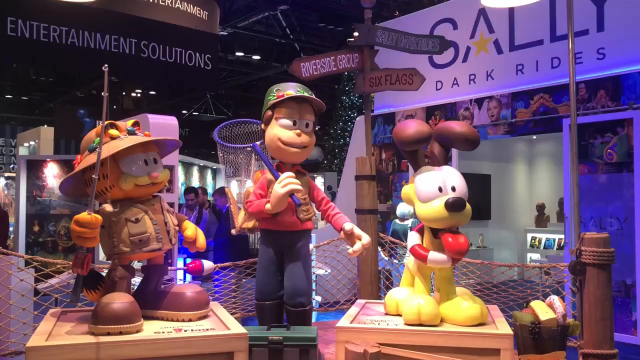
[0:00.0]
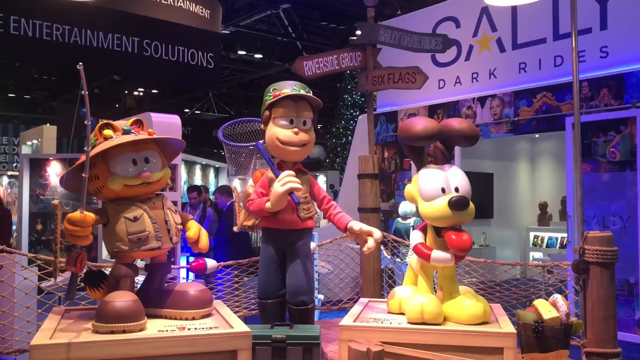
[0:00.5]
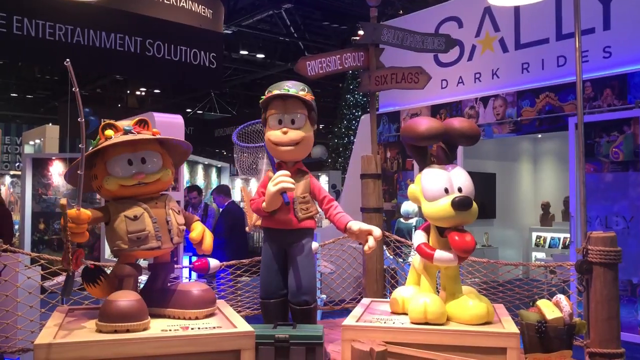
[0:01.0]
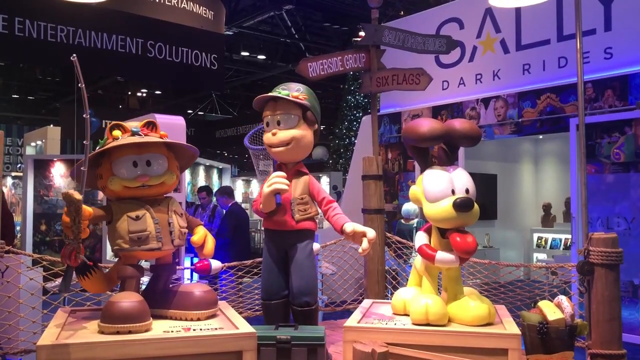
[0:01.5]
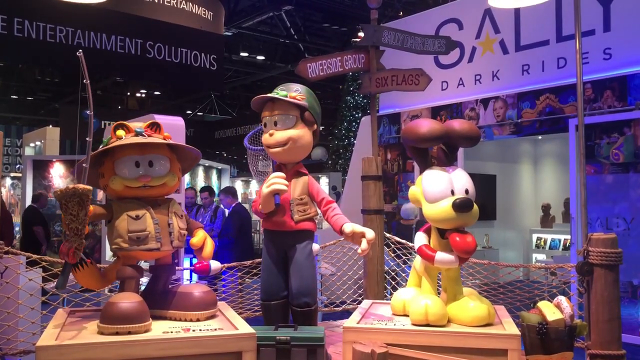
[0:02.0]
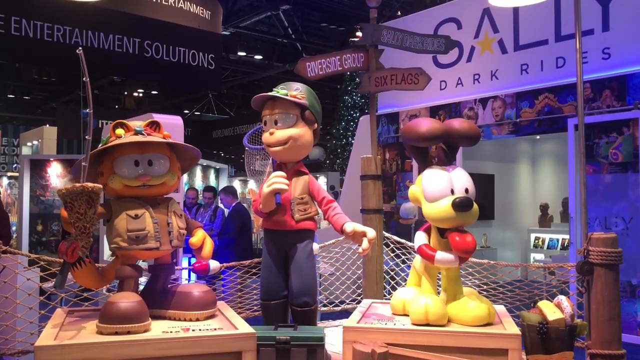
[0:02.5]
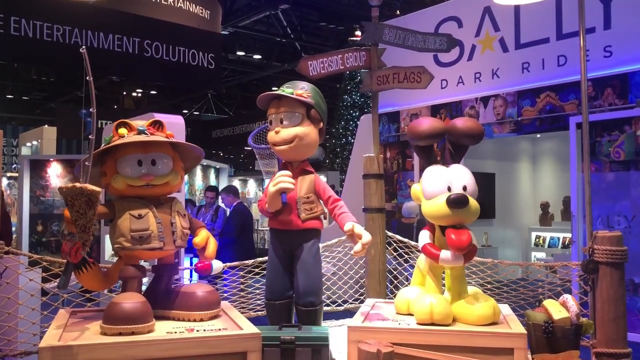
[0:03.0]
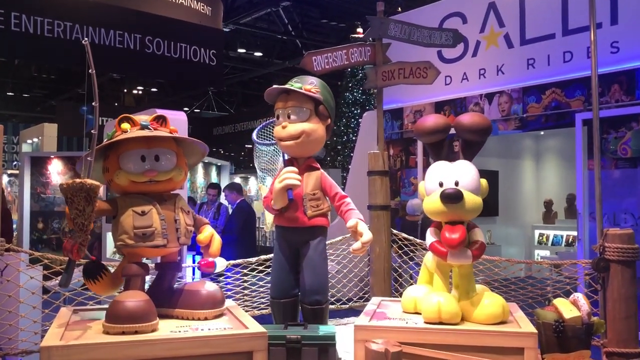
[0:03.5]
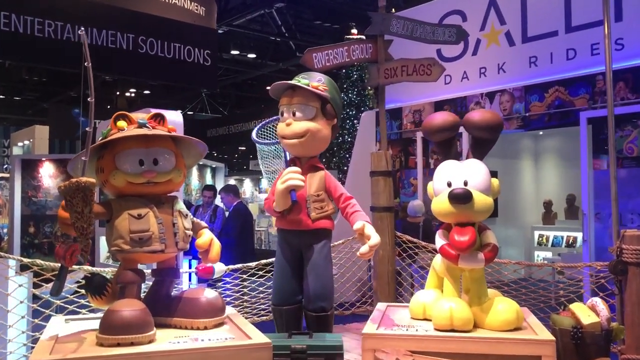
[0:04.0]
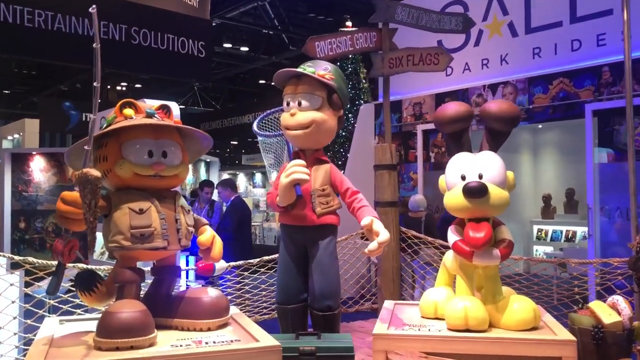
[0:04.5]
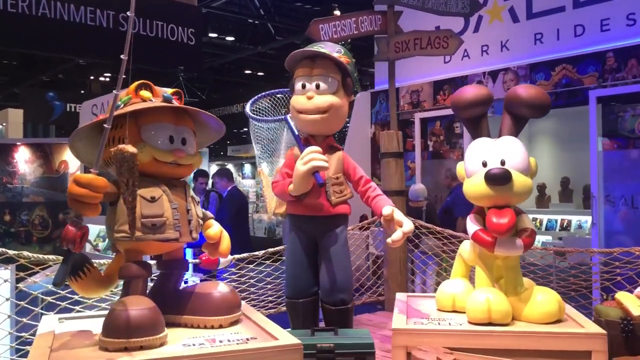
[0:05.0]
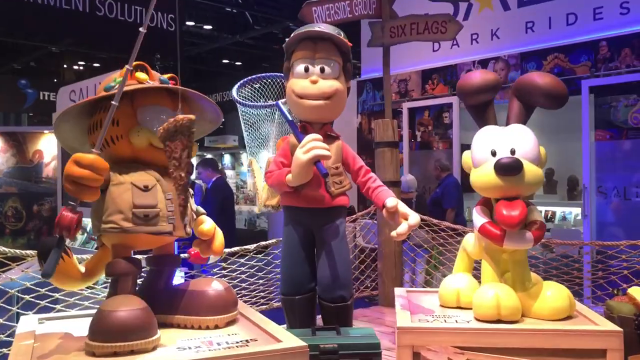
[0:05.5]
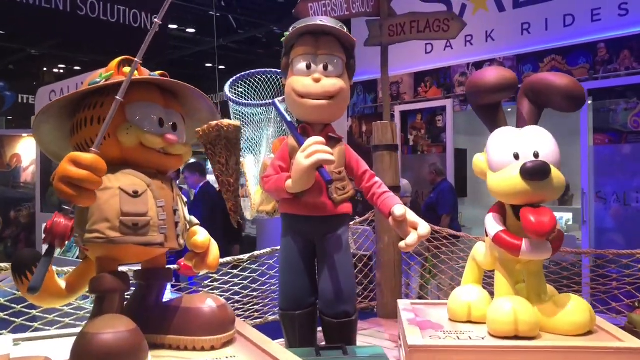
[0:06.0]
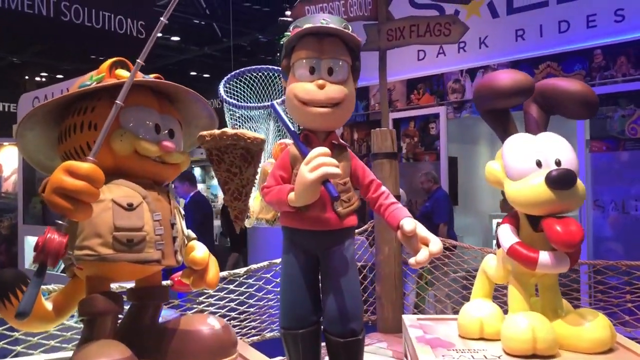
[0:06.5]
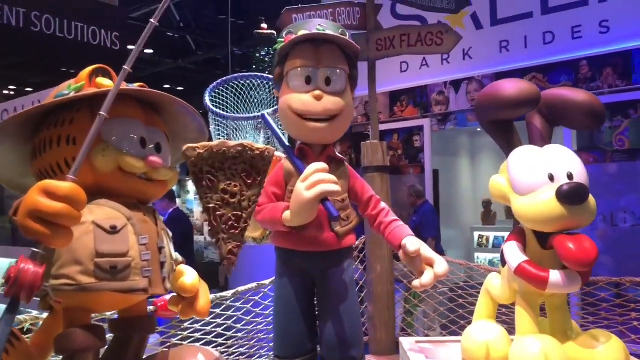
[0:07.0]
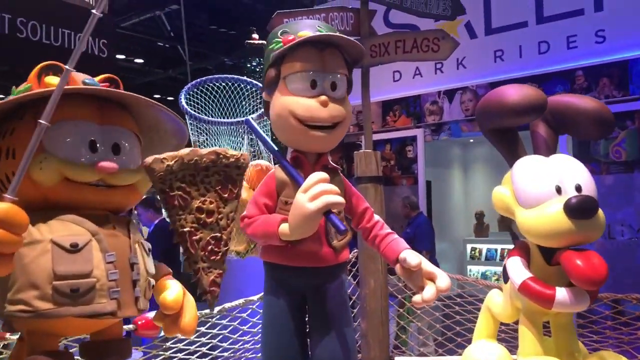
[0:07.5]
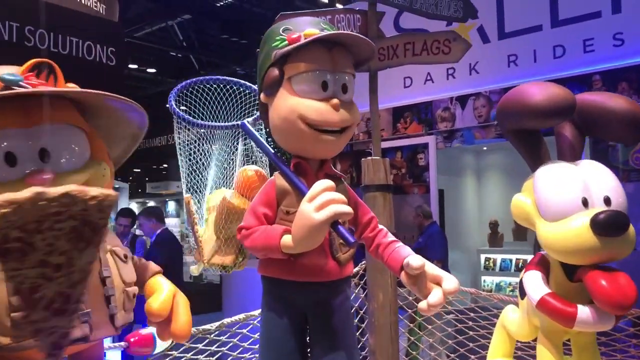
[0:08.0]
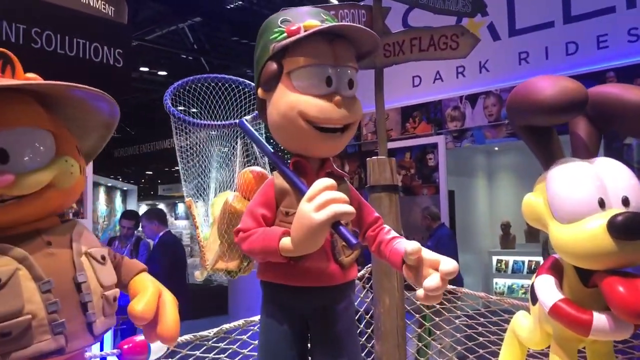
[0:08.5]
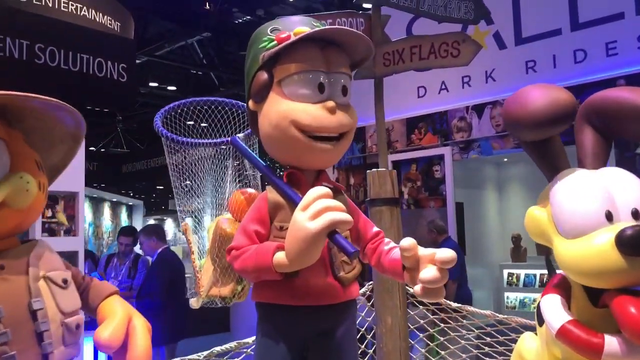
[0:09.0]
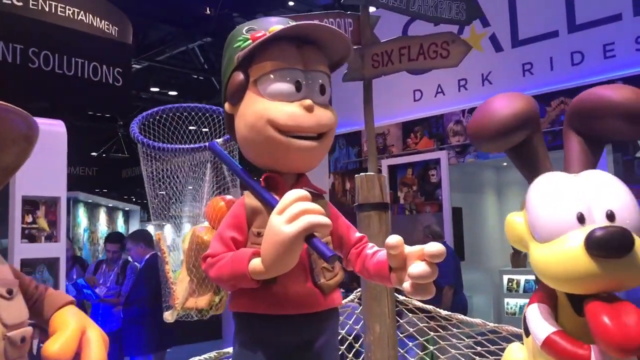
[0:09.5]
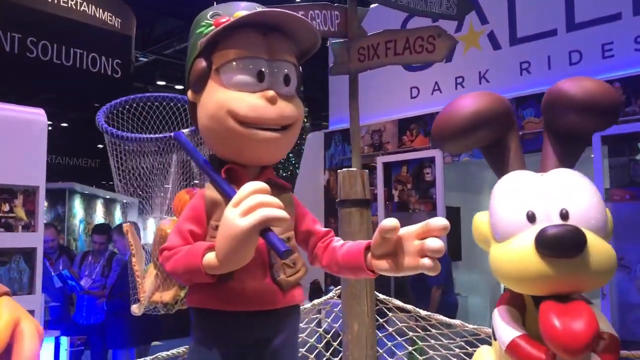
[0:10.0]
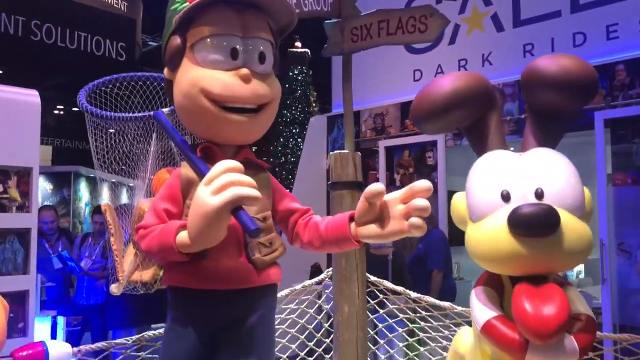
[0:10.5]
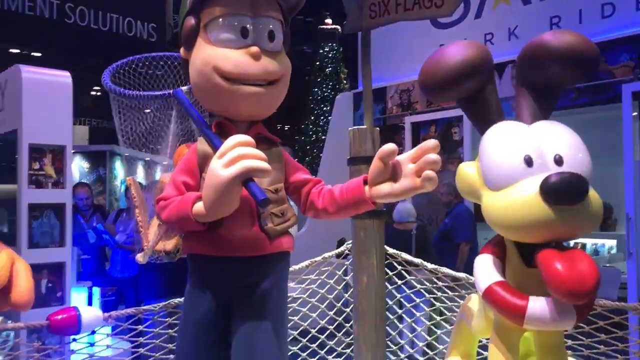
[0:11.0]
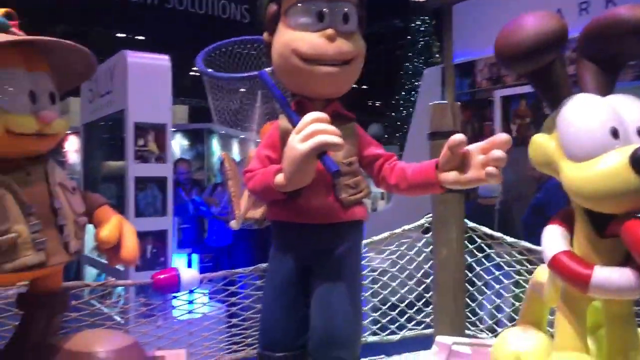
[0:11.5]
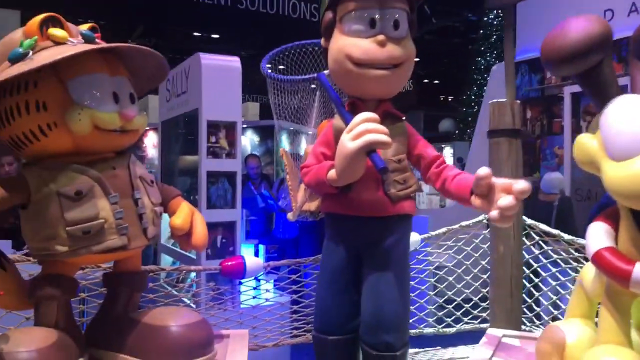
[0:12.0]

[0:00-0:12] Three animated characters appear to be on display in a store or a museum. One holds a fishing net full of veggies. Another has a fishing rod and has caught a piece of pizza that dangles from the rod. The third is a dog with a very large, long tongue. The characters look like they are talking, moving their mouths as they speak, in a little group. Next to them, behind them, text reads "Dark Rides," so the place is probably an amusement park. There are lights on the ceiling, so it may be an indoor area.